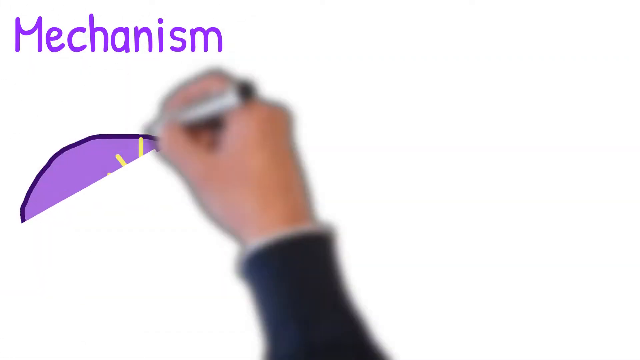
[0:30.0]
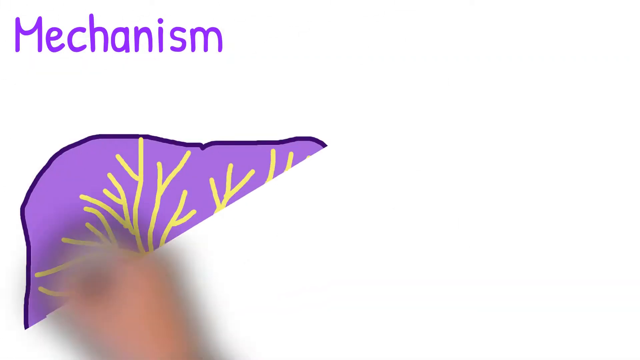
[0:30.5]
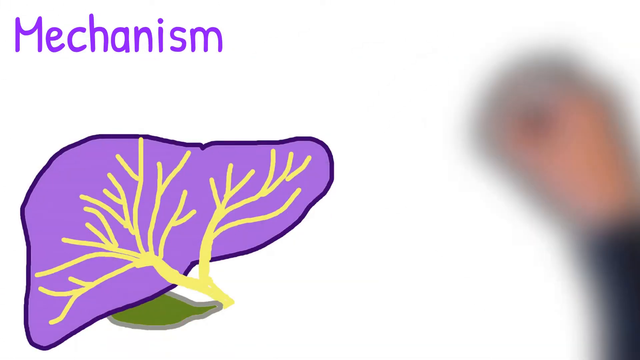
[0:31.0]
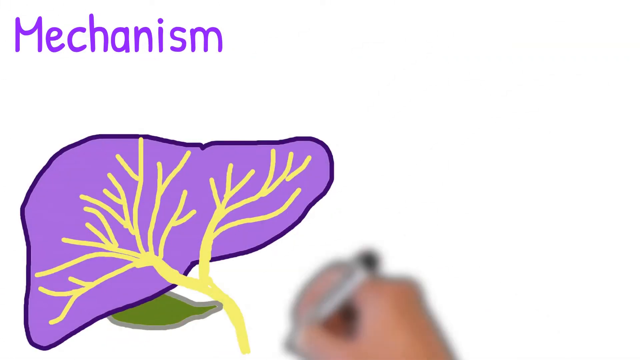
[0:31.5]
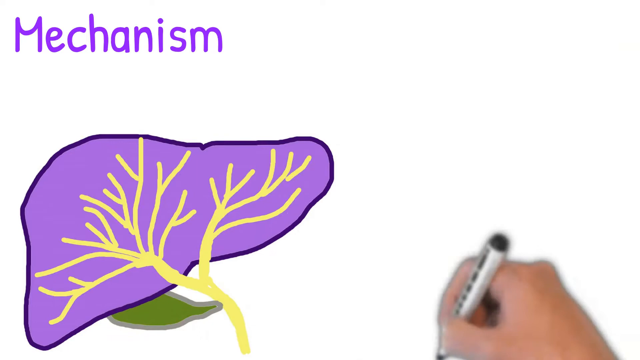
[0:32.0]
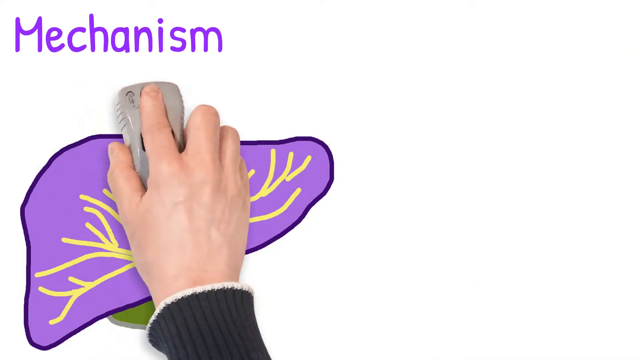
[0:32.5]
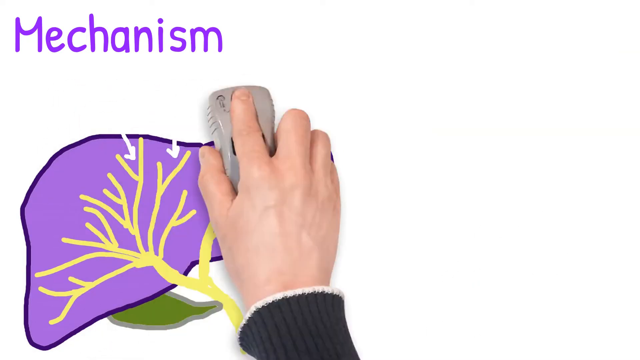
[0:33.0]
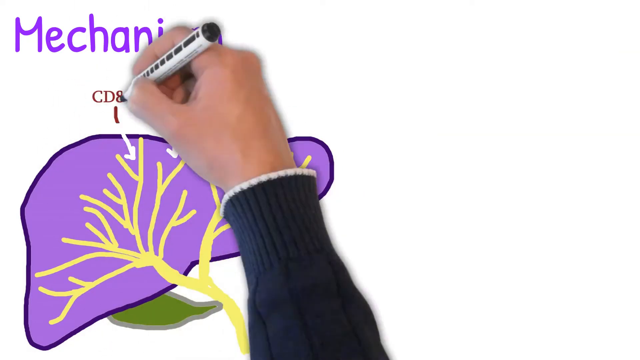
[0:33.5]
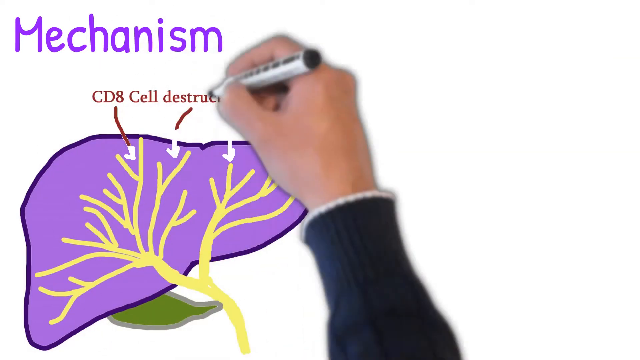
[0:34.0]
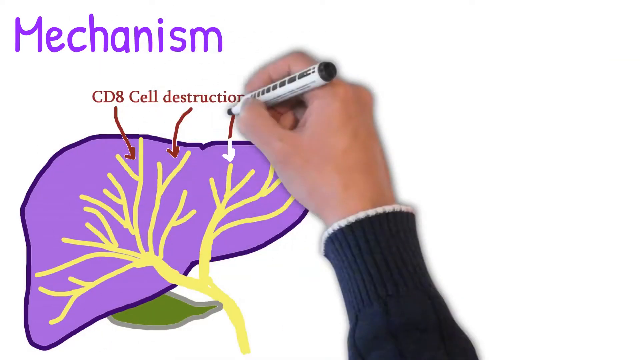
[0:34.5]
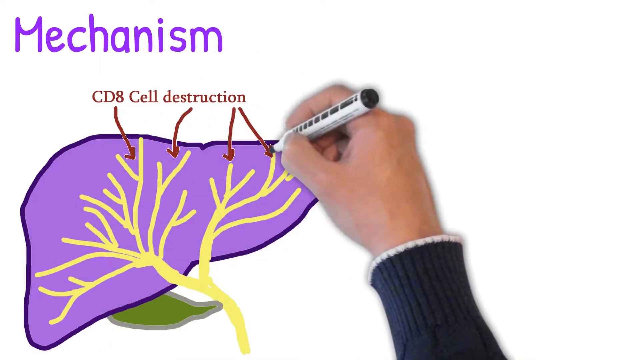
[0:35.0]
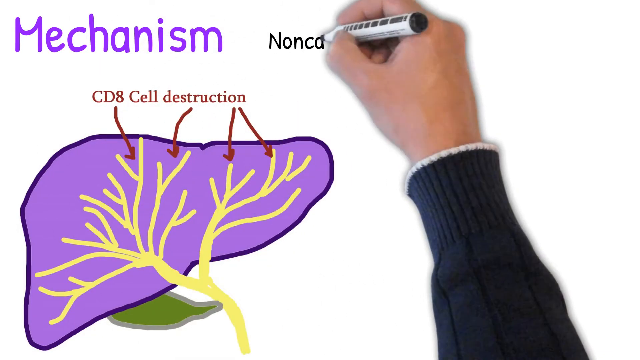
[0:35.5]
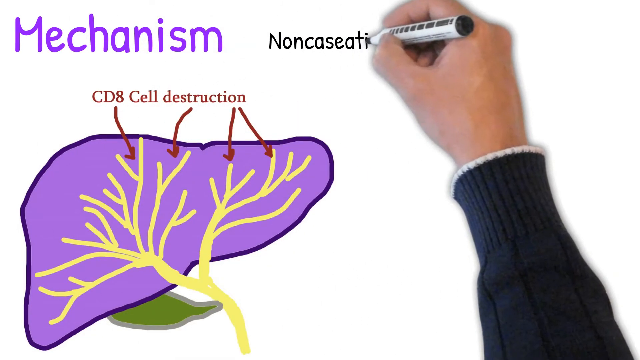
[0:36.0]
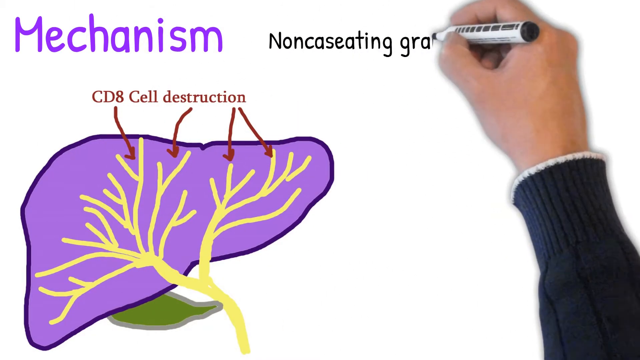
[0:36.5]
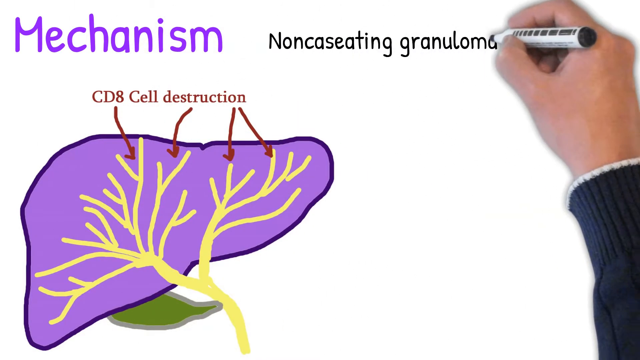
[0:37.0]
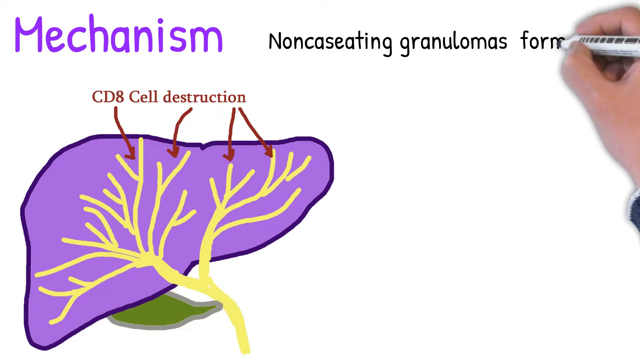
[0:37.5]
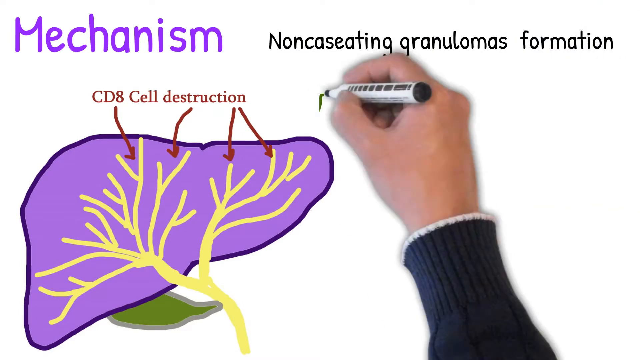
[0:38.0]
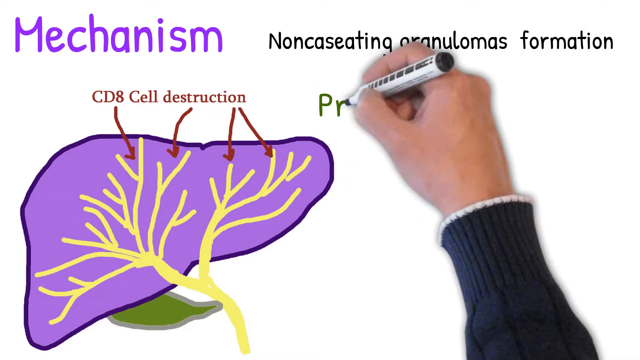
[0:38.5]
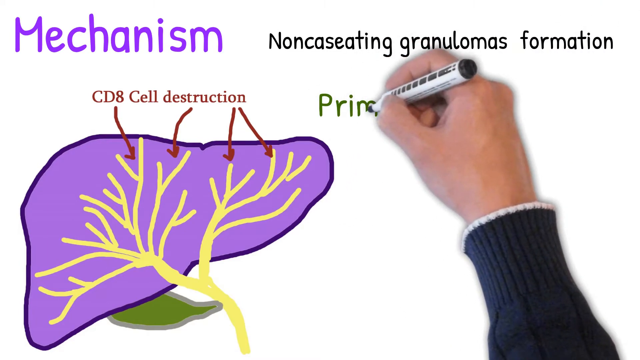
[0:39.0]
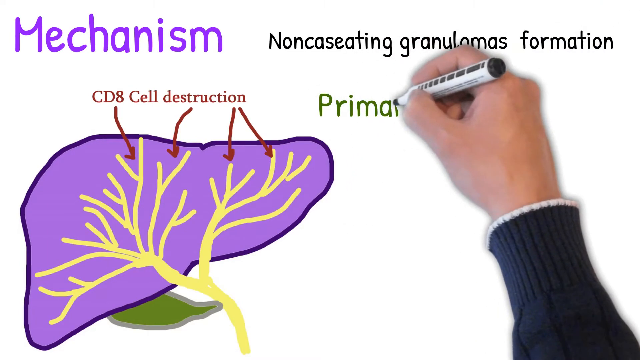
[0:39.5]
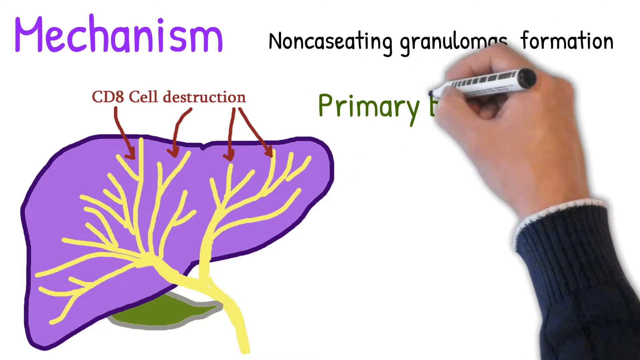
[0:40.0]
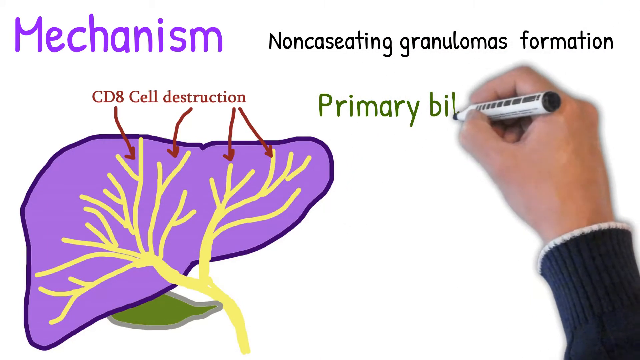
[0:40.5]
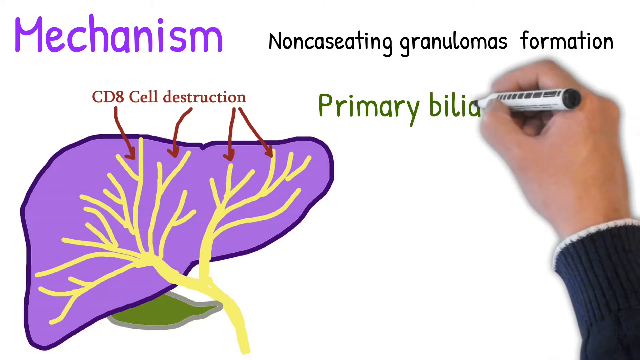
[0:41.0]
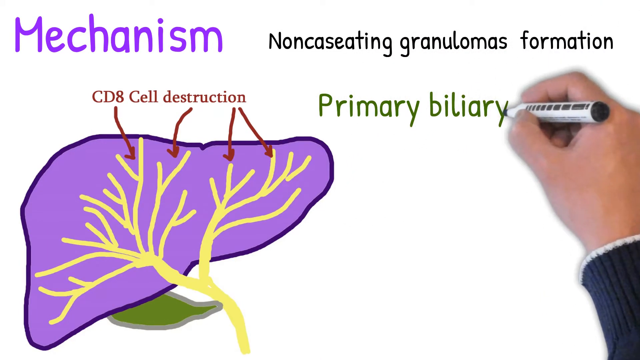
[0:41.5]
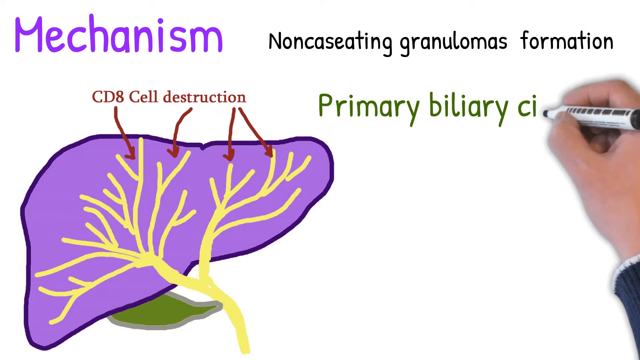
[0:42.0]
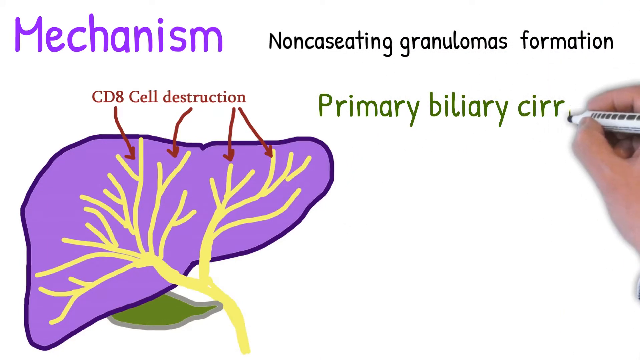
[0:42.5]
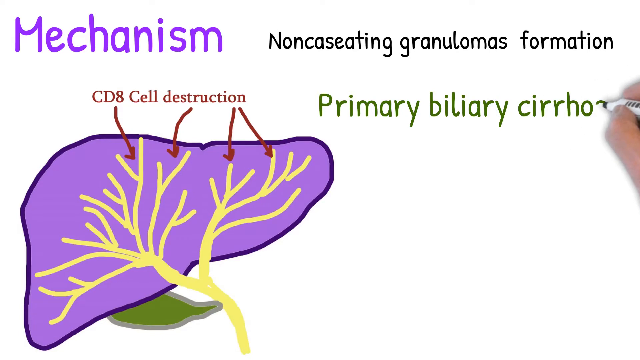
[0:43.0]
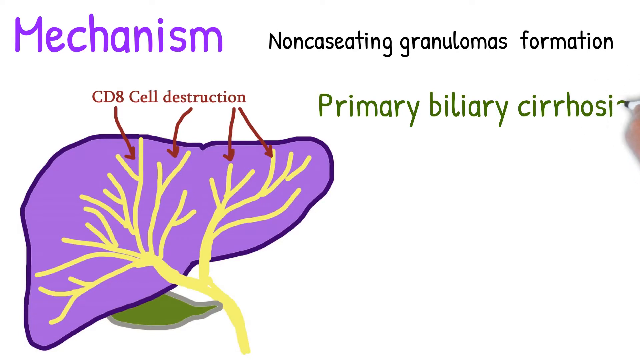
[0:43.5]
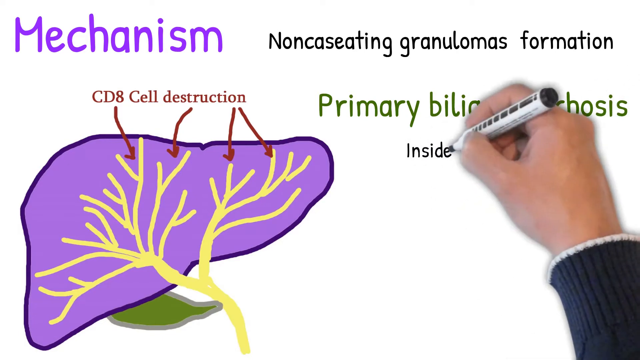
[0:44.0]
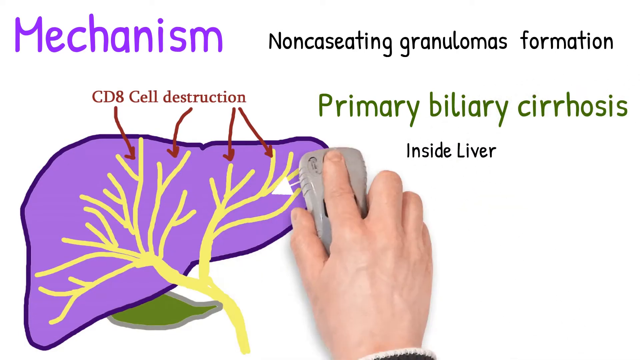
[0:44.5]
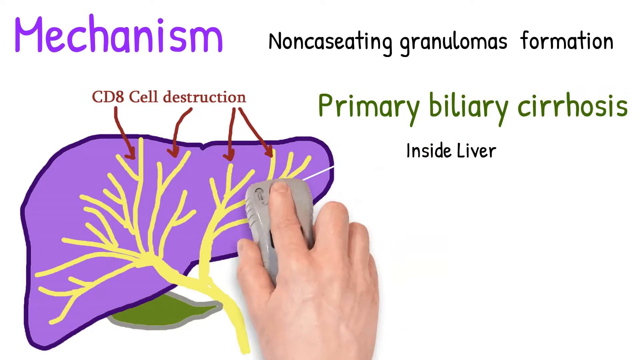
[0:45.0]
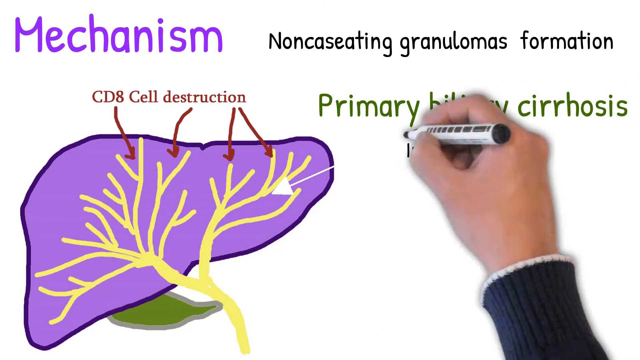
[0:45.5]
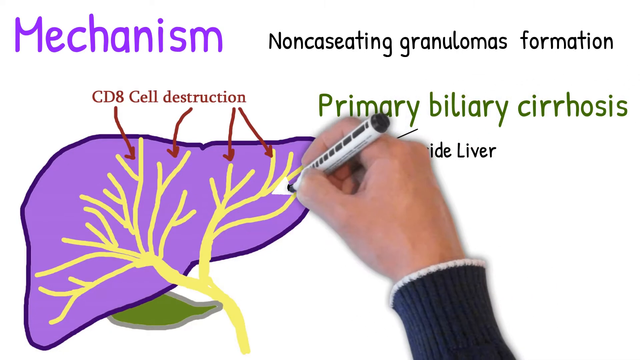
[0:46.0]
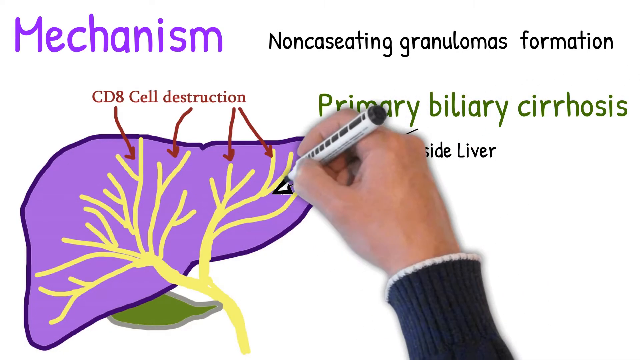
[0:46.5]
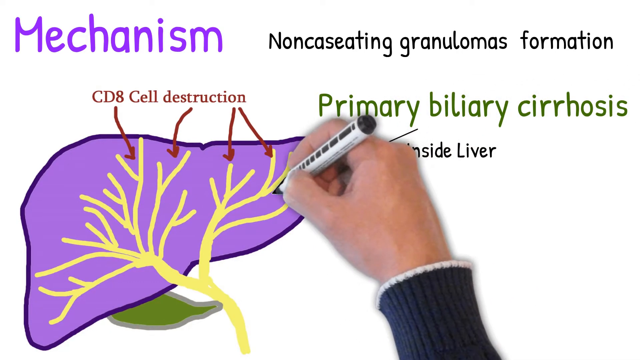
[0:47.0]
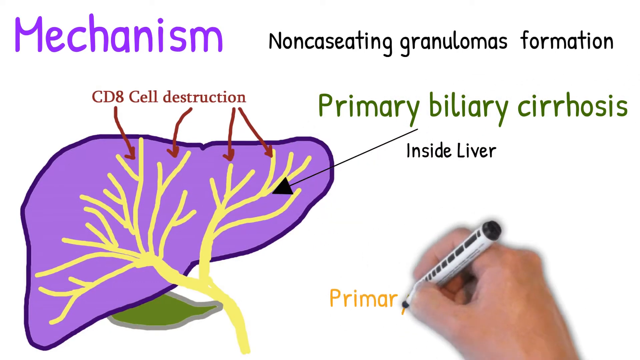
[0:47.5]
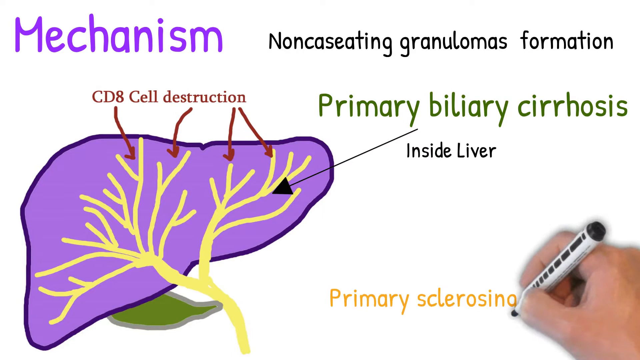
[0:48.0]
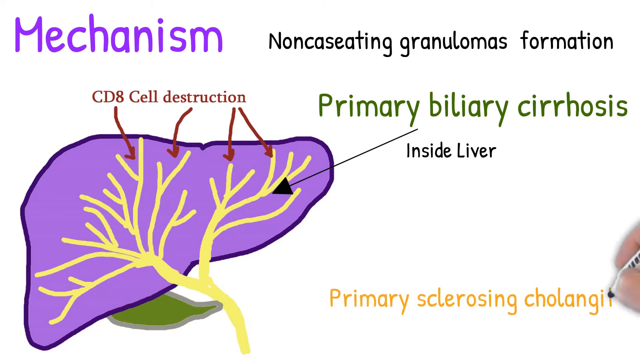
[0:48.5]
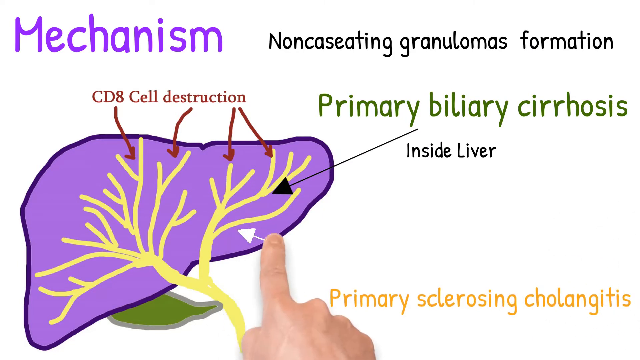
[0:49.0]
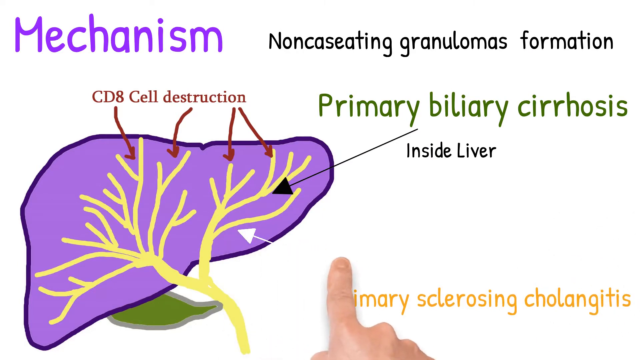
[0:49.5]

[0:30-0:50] A Caucasian male's right hand draws and writes various things on a whiteboard. The arm wears a long-sleeved dark gray sweater with a bit of white fringe along the edge of the sleeve, and the hand holds a white marker with black writing and a black end. At the top left of the whiteboard, purple text reads "mechanism", with a drawing of a purple liver with yellow veins drawn on the front of it and, underneath, a green bit that looks like it might be the gallbladder. The hand moves to the bottom right of the screen and keeps drawing, adding white arrows over the top of the liver from left to right. Above them, in red text, it writes "CD8 cell destruction" with red arrows, approximately four, pointing down to the liver over the white arrows. To the right, above that, black text reads "non-caseating granulomas formation"; beneath it, in green, "primary biliary cirrhosis"; and beneath that, in black, "inside liver". The hand draws a white arrow in the upper right quadrant from "primary biliary cirrhosis" to the top right quadrant of the liver, then fills the arrow in with black. At the bottom right, in orange text, he writes "primary sclerosing cholangitis".